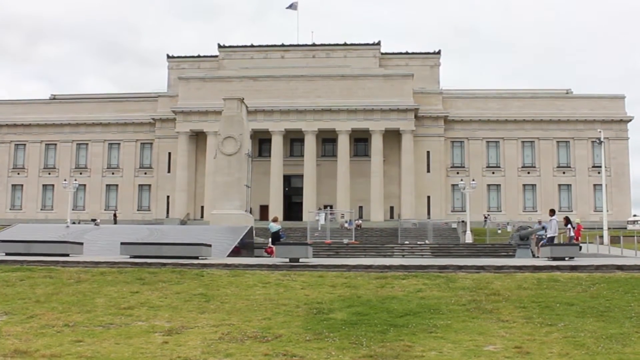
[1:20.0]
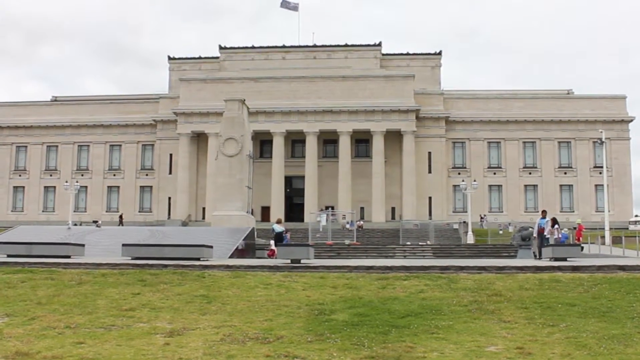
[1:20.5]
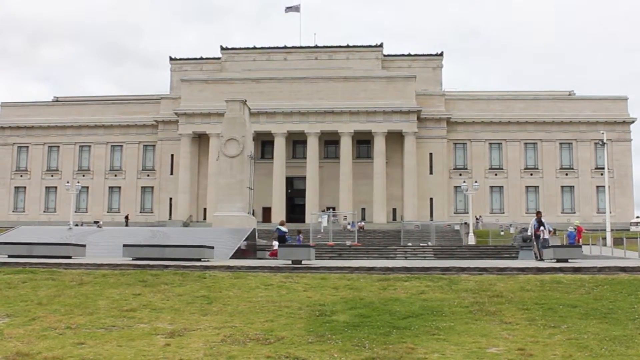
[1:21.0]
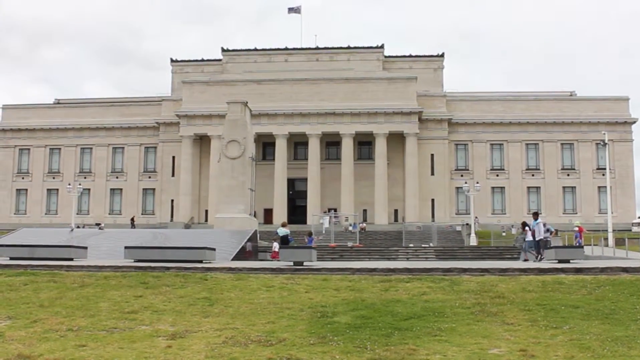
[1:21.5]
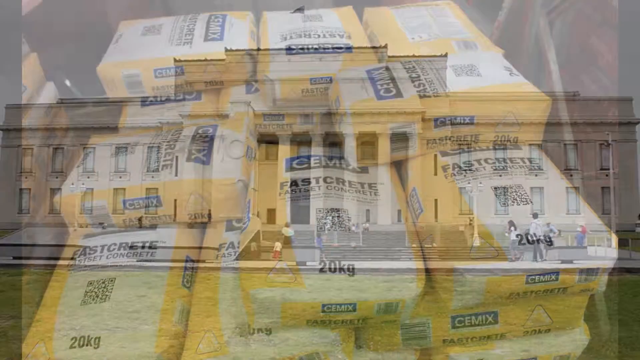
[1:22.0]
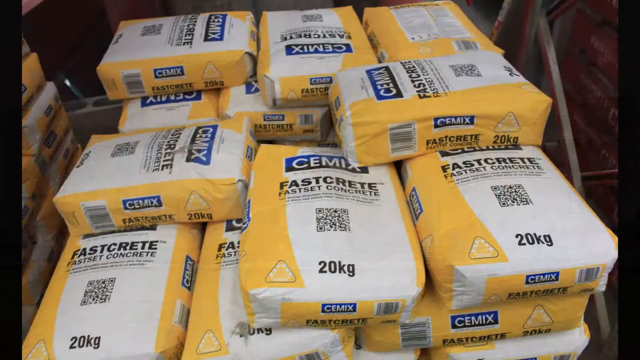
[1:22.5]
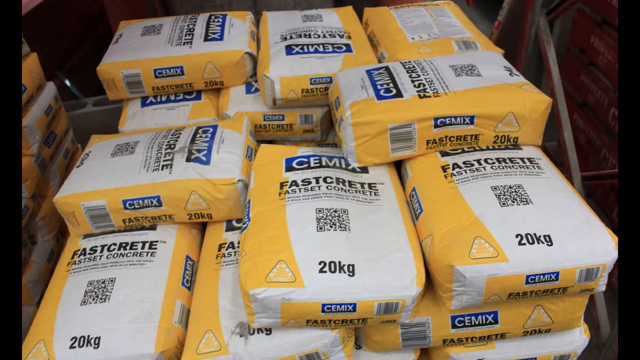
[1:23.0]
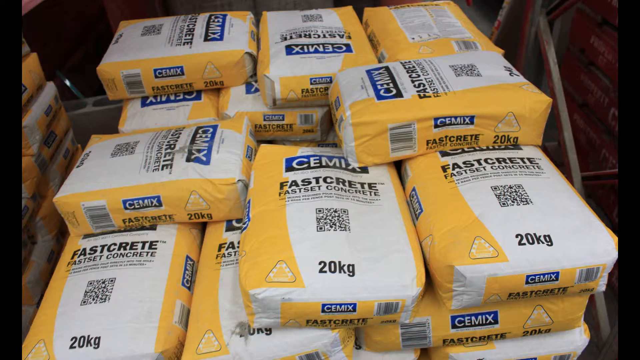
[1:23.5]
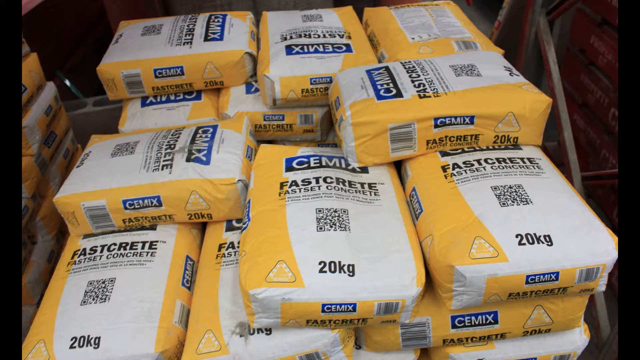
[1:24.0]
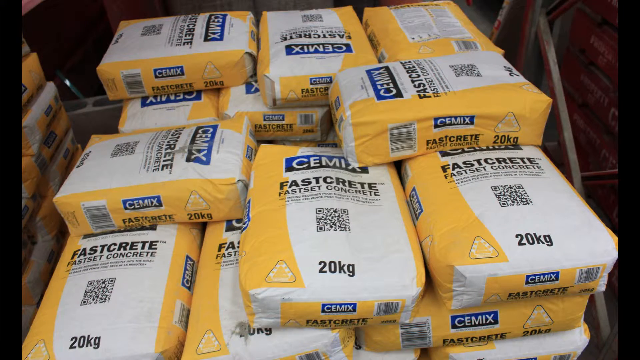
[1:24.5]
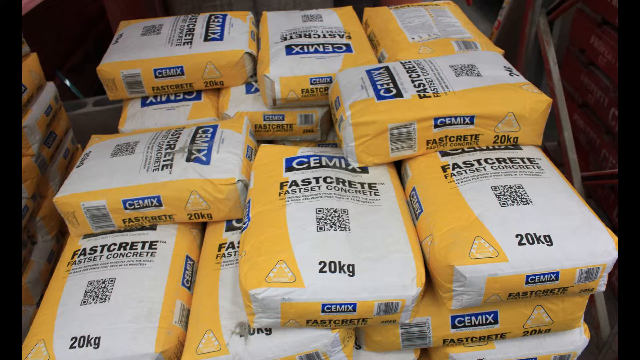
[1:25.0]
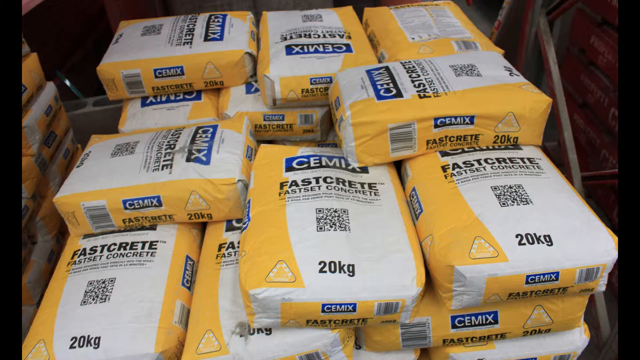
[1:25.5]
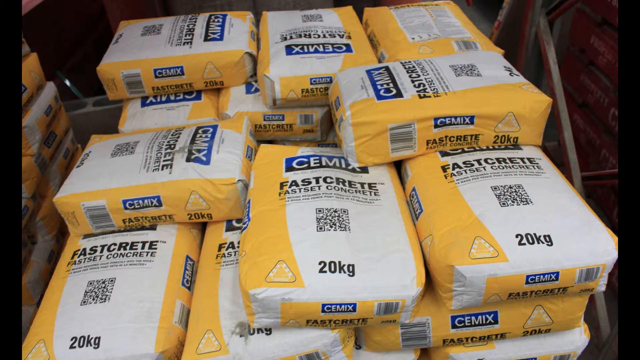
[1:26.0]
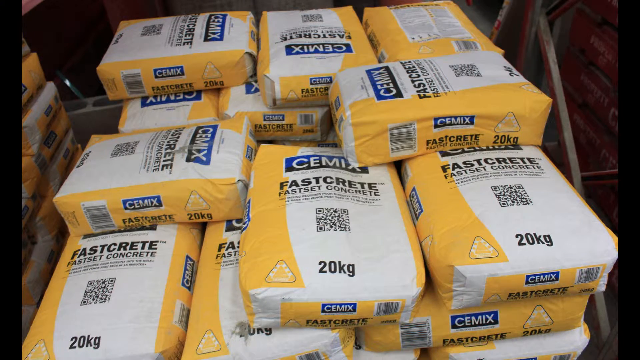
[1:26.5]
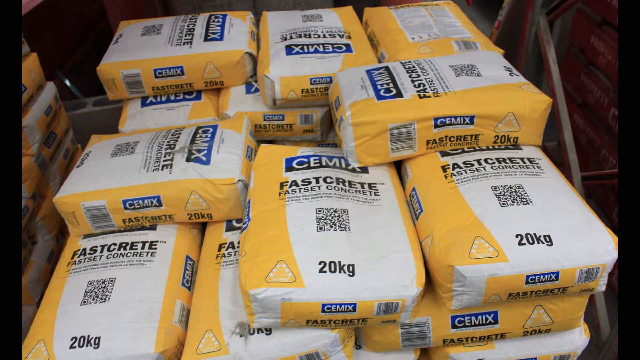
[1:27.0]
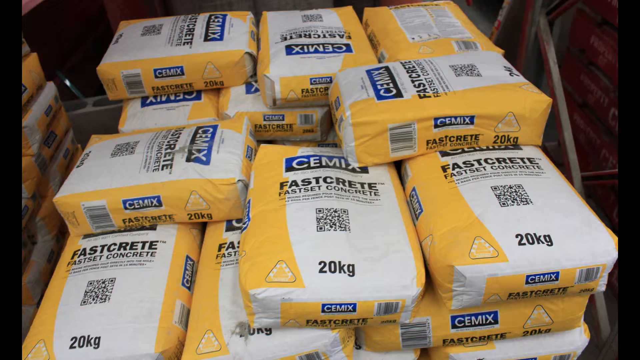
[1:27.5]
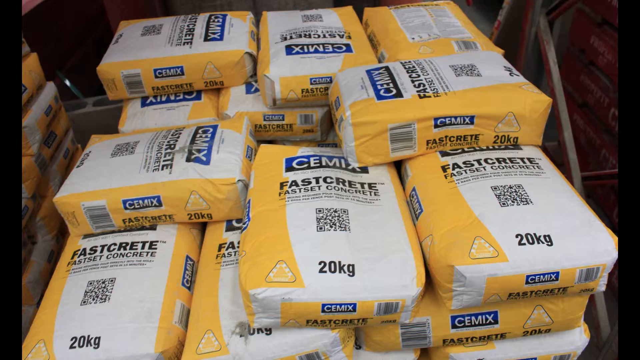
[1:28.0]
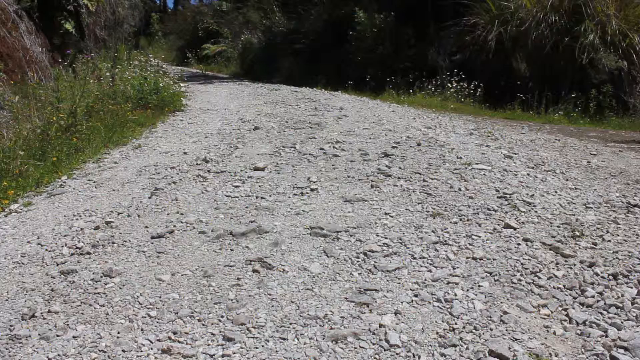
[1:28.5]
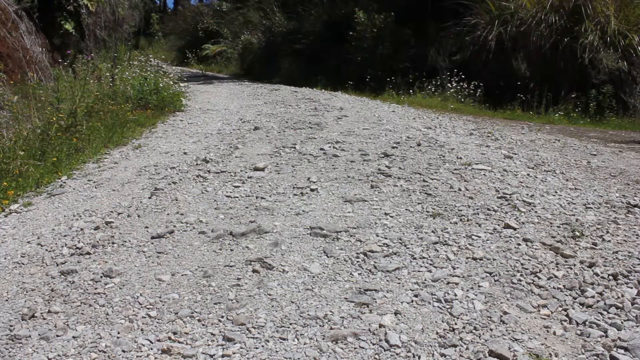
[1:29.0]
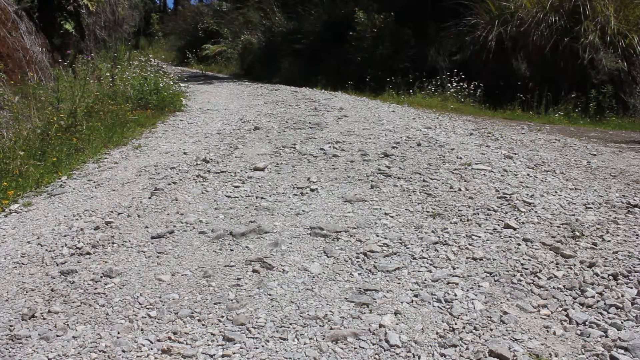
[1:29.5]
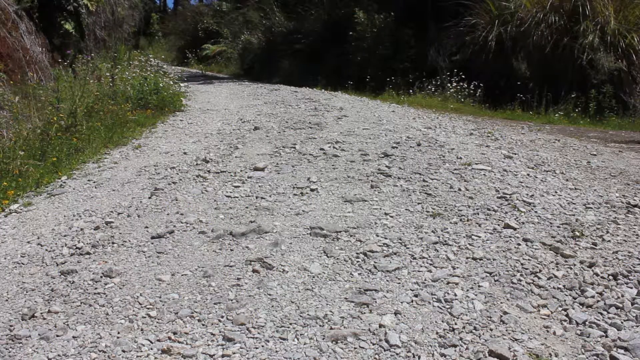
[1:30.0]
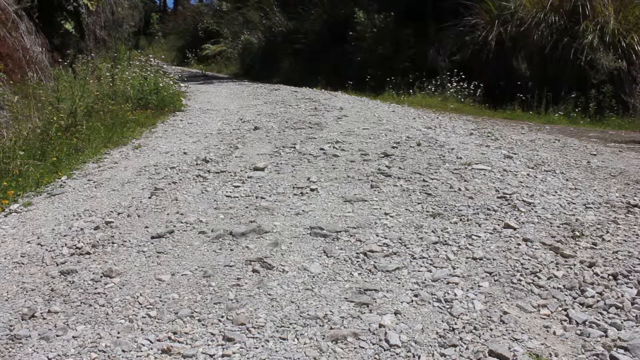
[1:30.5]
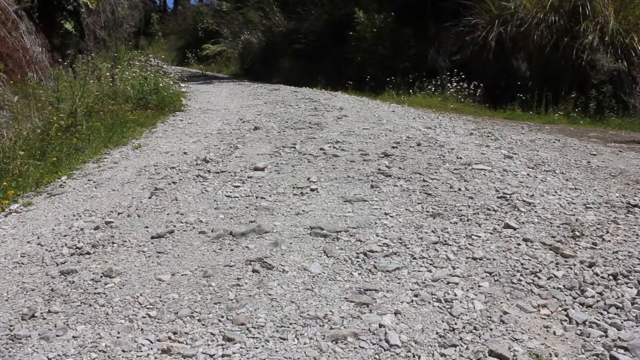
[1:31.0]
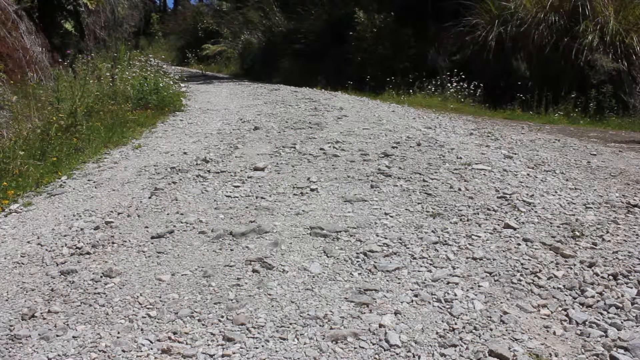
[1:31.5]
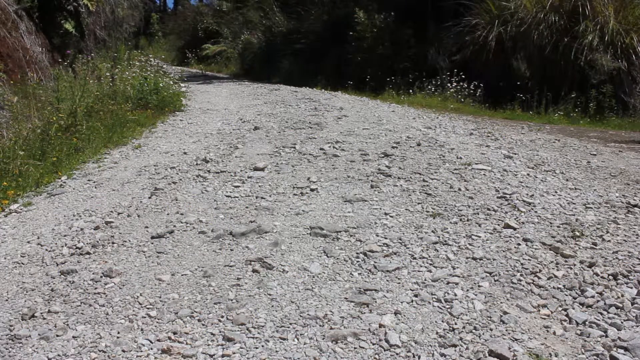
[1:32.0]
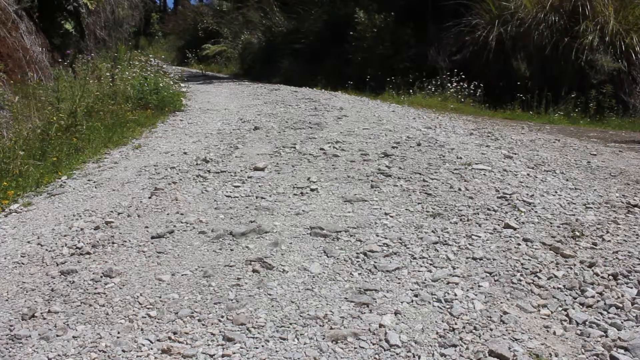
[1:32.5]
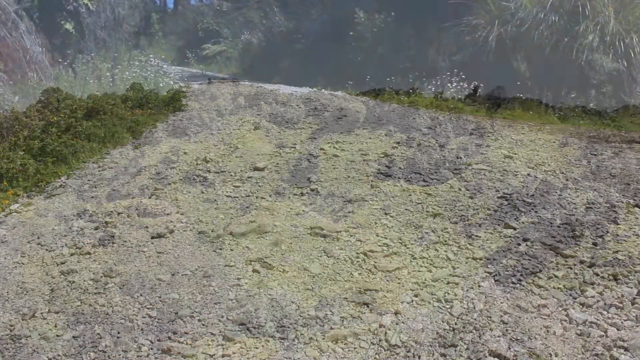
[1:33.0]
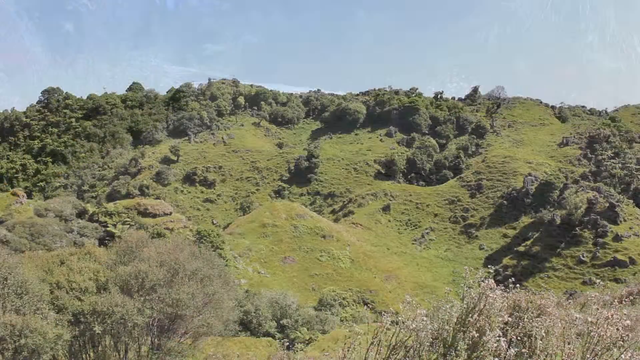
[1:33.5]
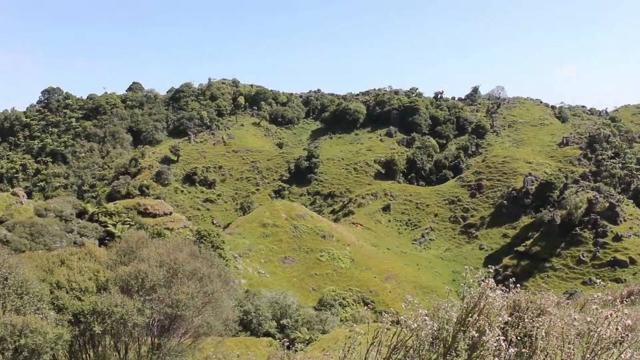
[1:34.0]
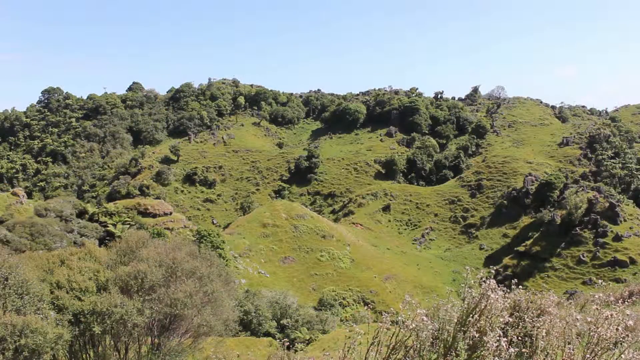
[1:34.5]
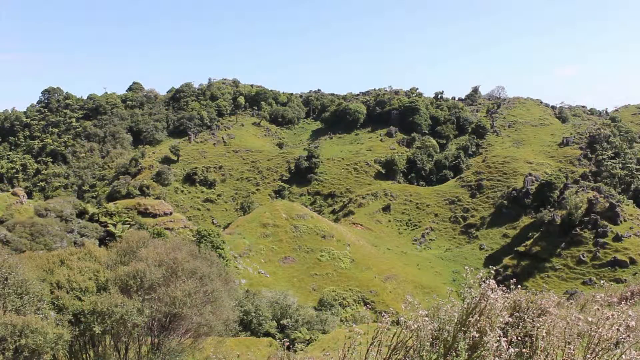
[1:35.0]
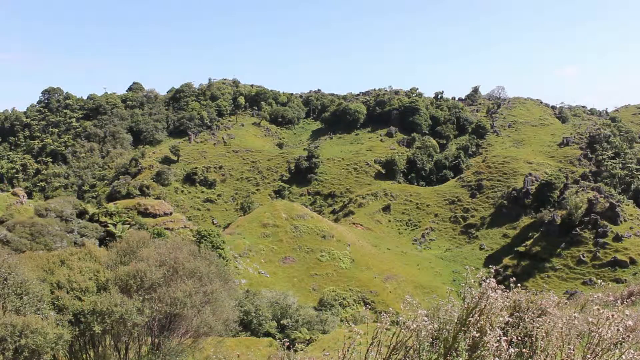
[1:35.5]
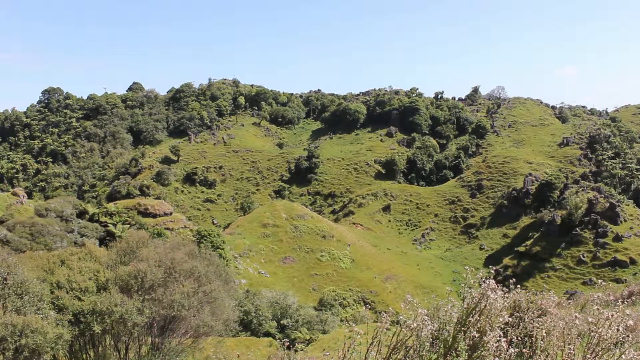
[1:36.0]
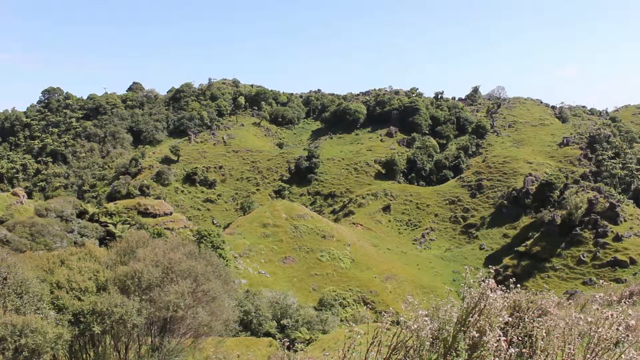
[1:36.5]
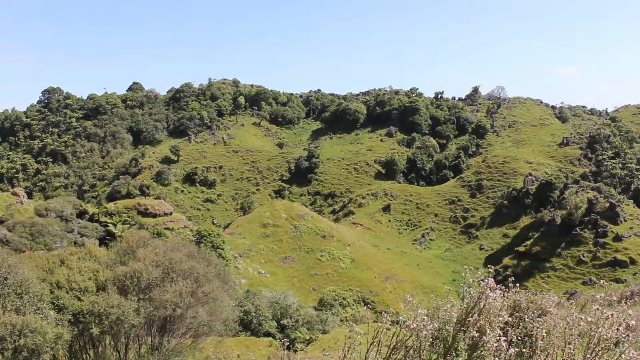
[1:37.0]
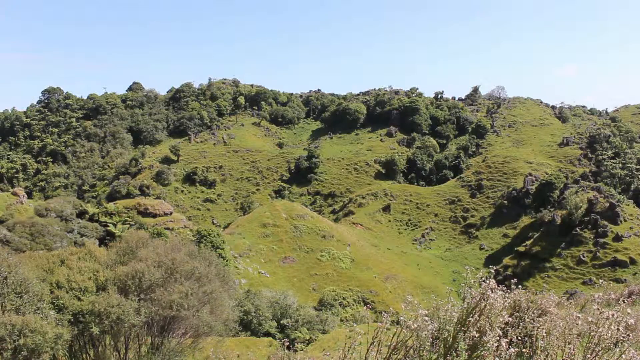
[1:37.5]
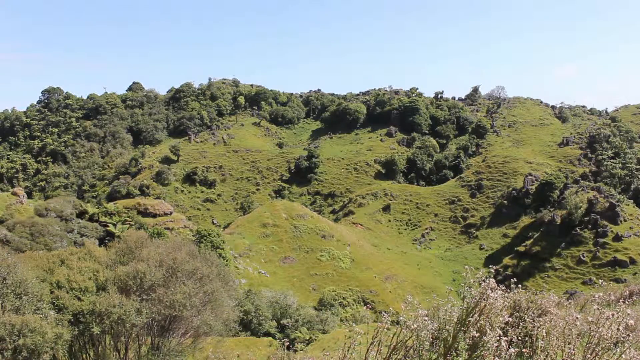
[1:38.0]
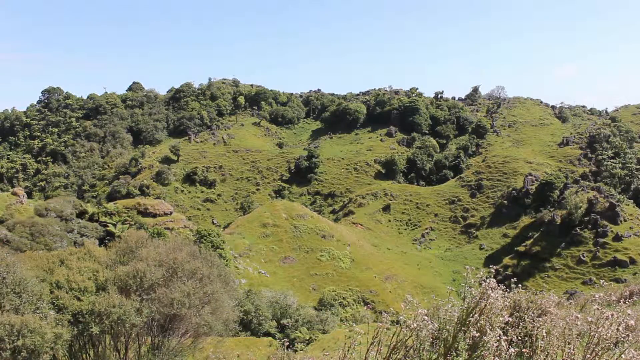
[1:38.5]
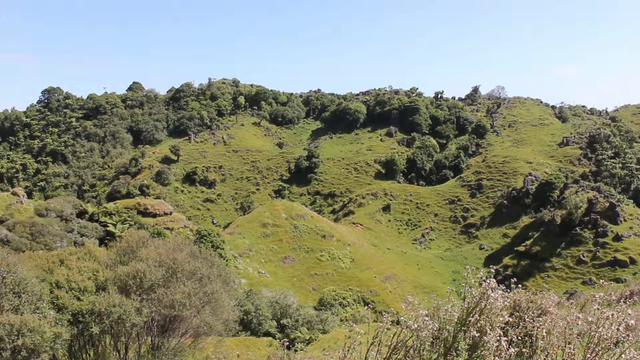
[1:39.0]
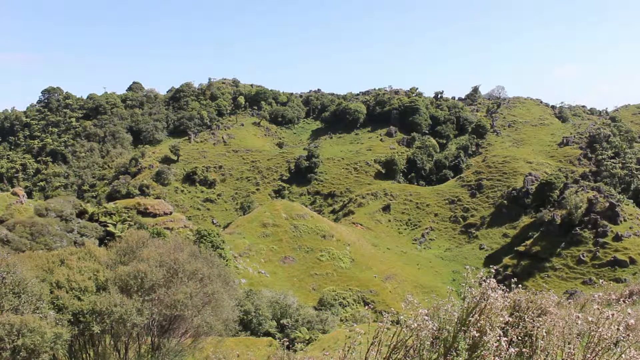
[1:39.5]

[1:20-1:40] A building is shown, perhaps a building for this park or nature preserve. It is two stories tall, with two rows of five windows each on each side and white curtains drawn. Stairs lead up to the entrance, which has black doors. There are eight pillars in front of the building, four on each side. In front of it there appears to be a vertical rectangular structure with a circle sort of embedded on the front. There are a couple of white poles on the right side, and a flag on top of the building, too far away to identify. The scene switches to cement in a bag called Fast Crete, then to a view of a concrete road, or a road that looks like it could be turned into concrete.